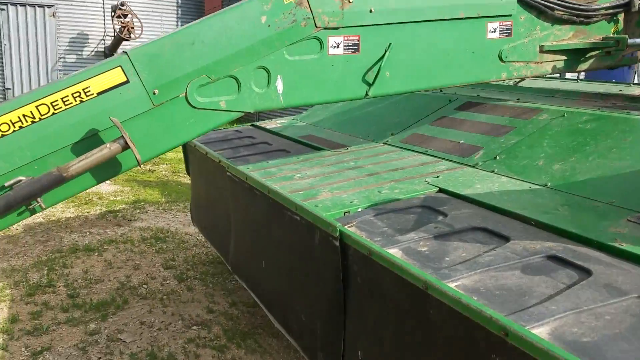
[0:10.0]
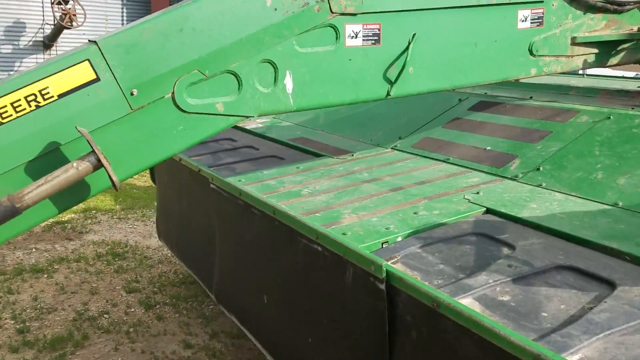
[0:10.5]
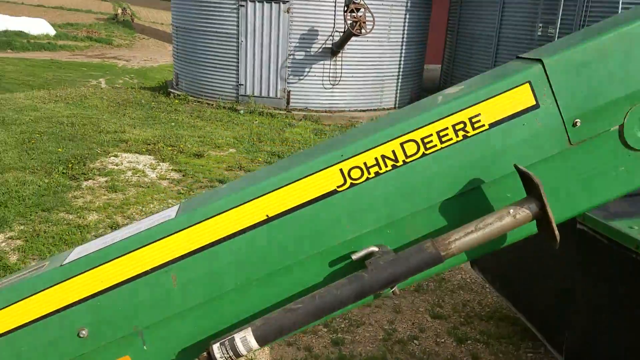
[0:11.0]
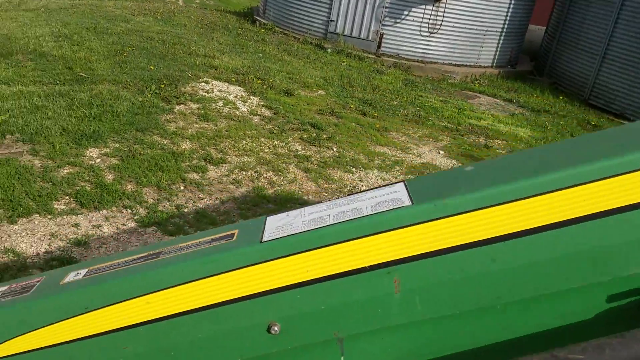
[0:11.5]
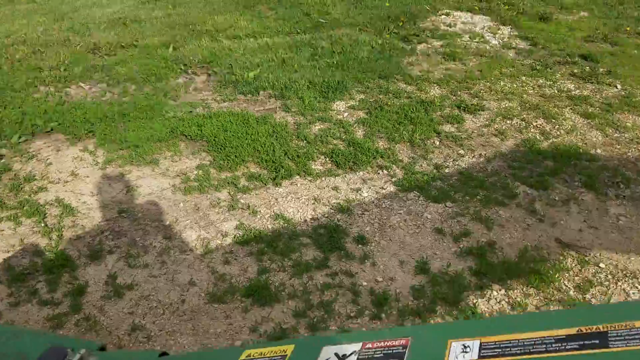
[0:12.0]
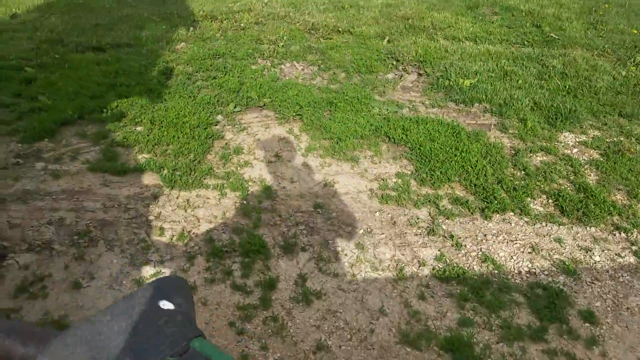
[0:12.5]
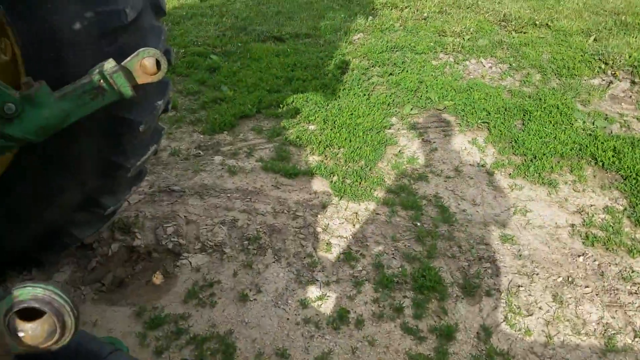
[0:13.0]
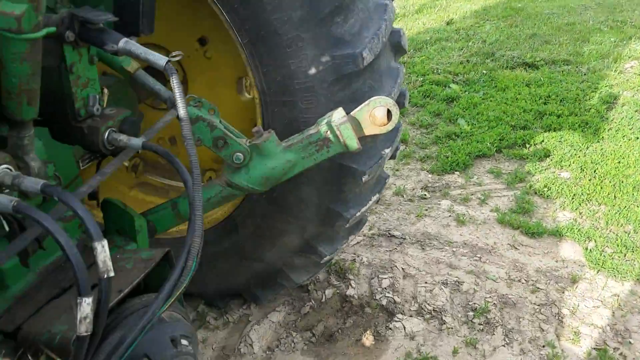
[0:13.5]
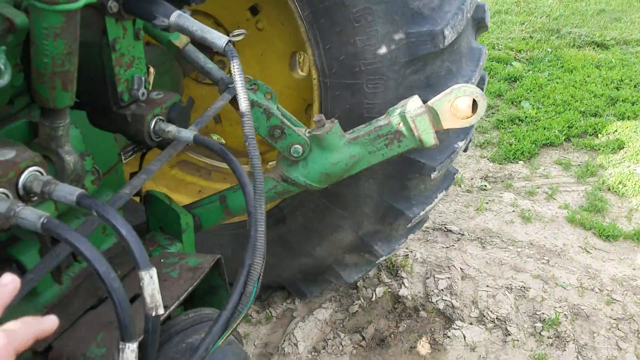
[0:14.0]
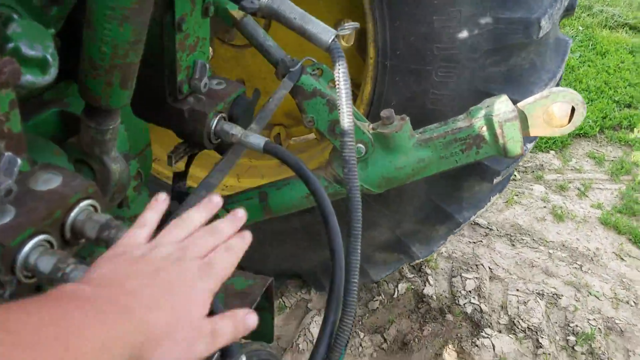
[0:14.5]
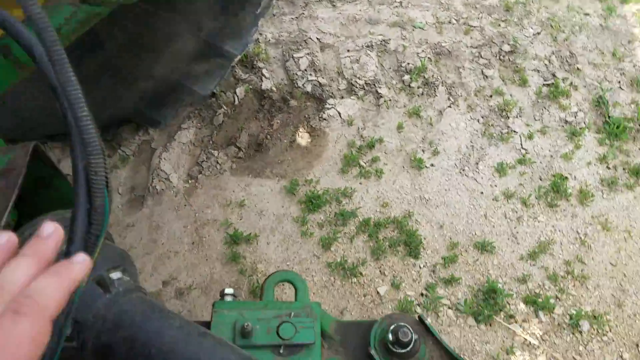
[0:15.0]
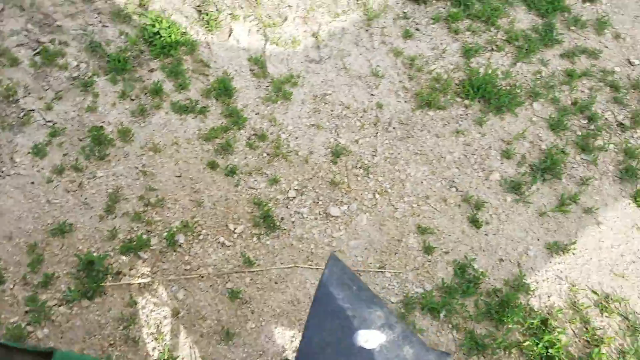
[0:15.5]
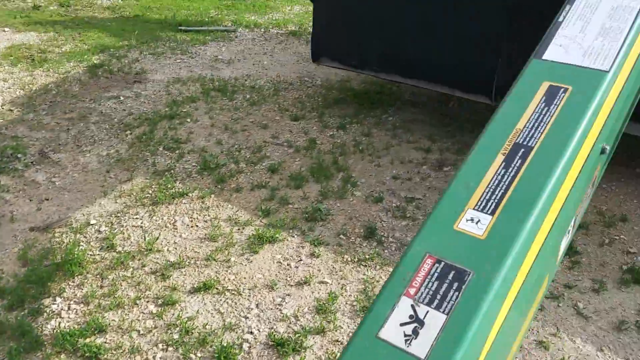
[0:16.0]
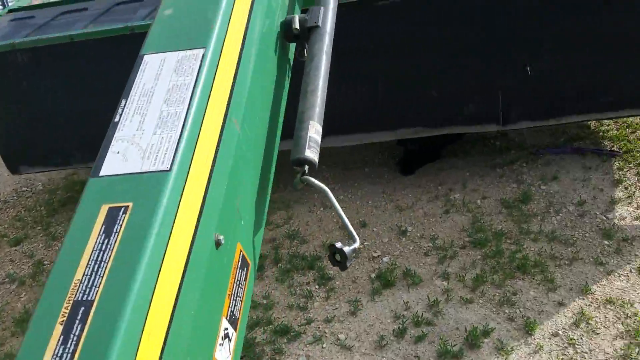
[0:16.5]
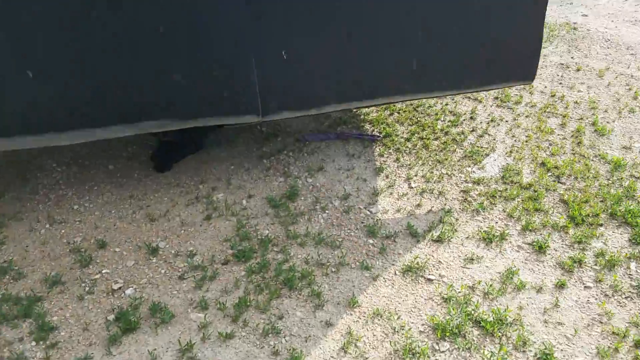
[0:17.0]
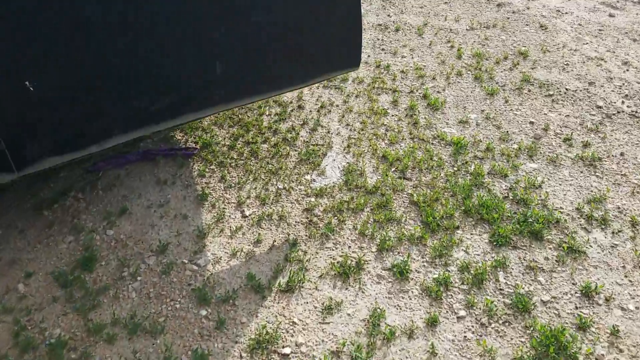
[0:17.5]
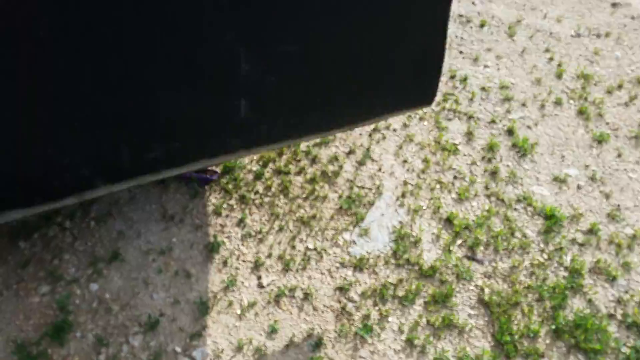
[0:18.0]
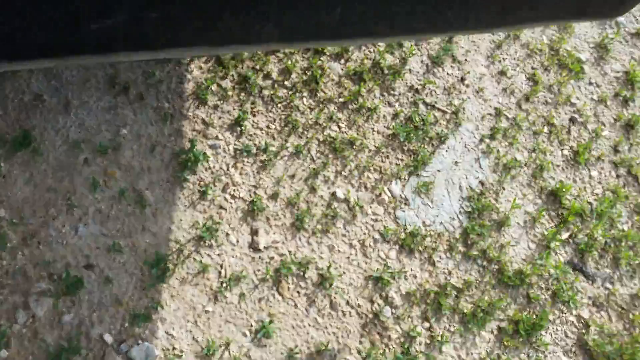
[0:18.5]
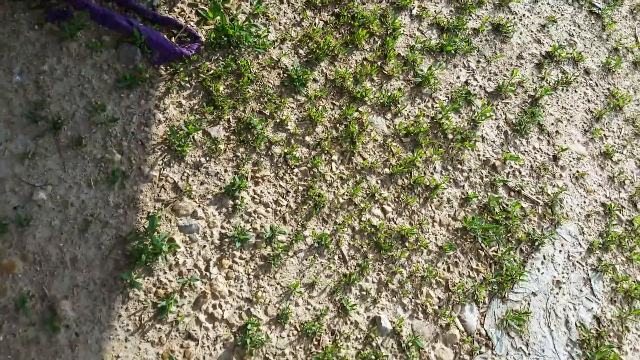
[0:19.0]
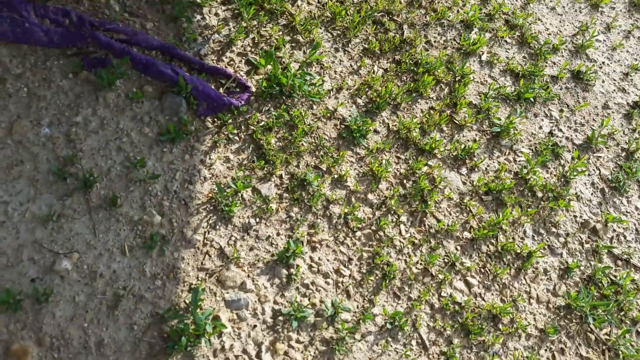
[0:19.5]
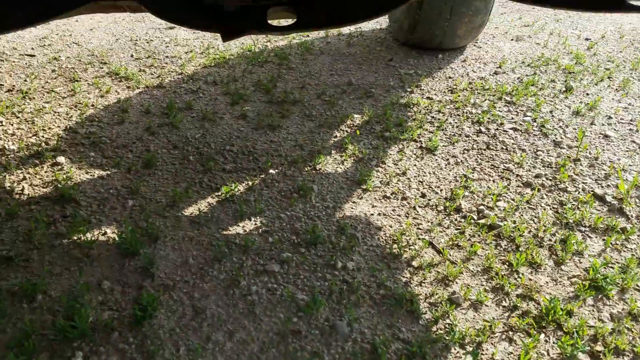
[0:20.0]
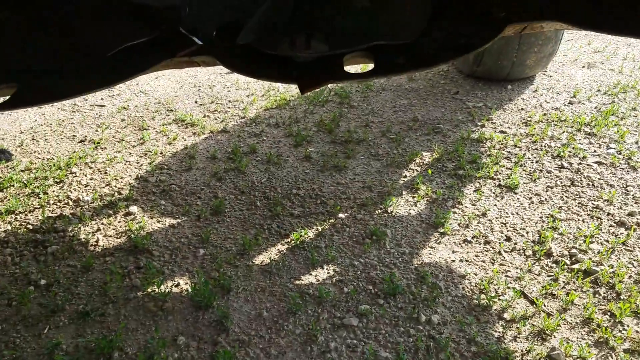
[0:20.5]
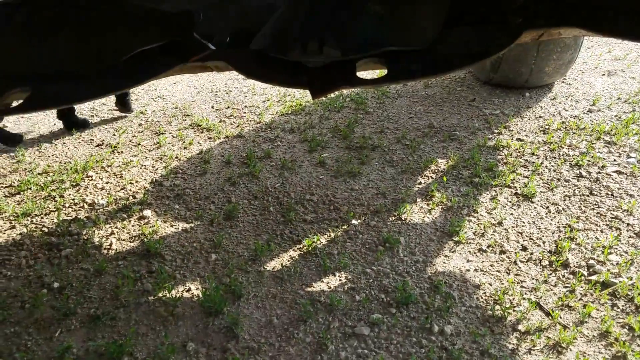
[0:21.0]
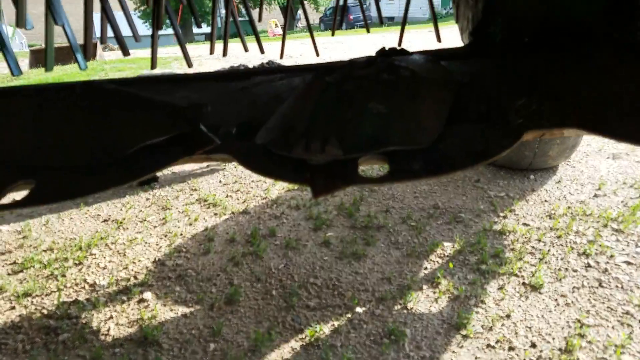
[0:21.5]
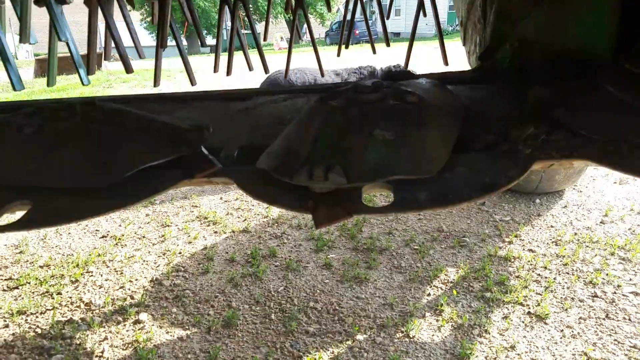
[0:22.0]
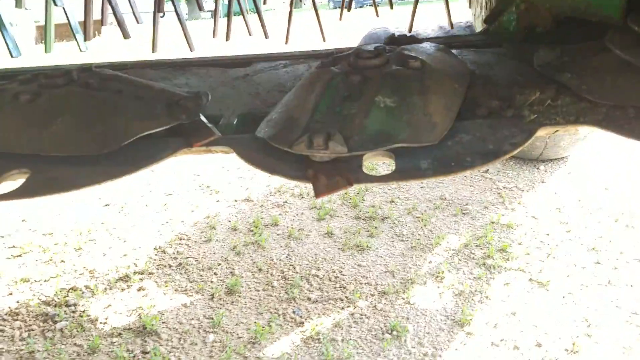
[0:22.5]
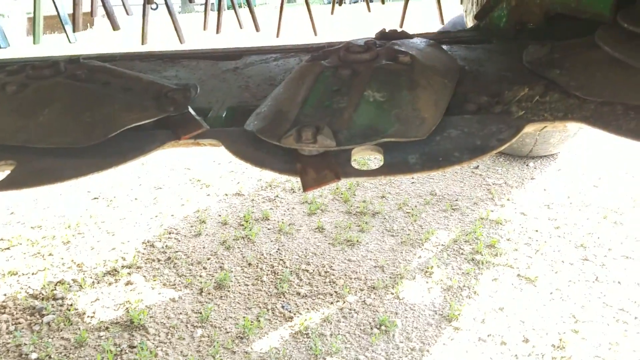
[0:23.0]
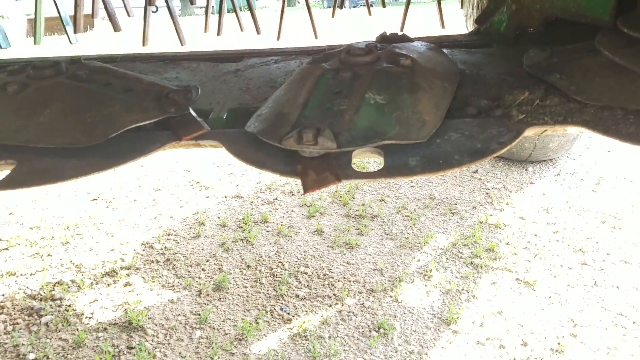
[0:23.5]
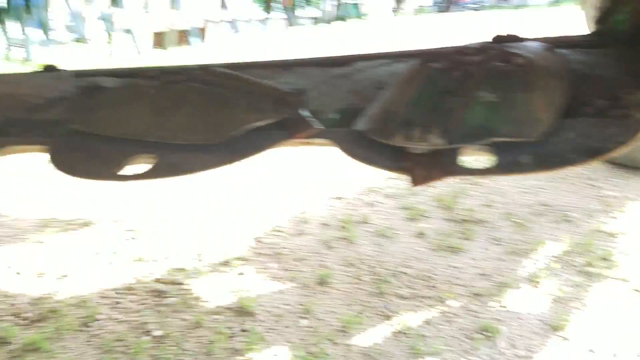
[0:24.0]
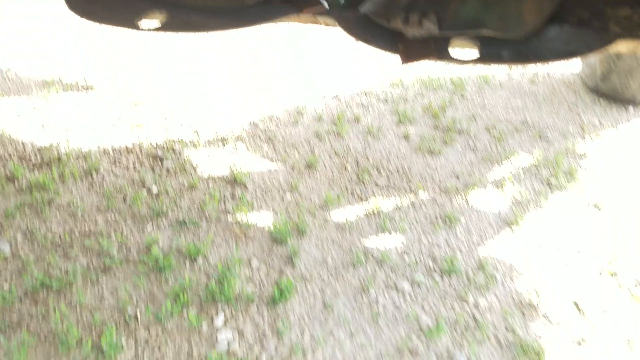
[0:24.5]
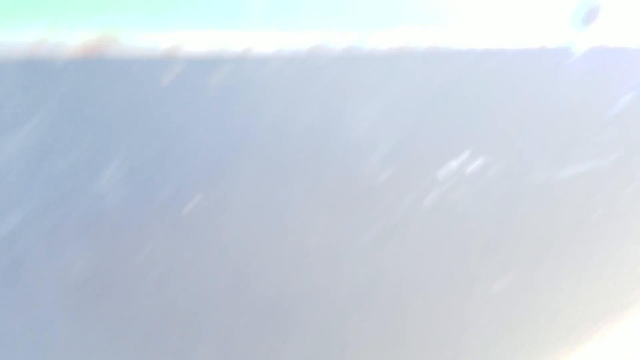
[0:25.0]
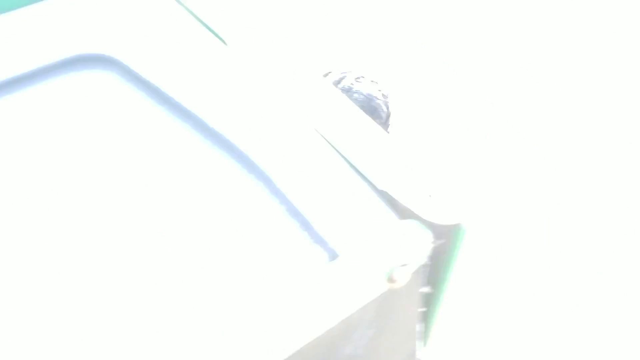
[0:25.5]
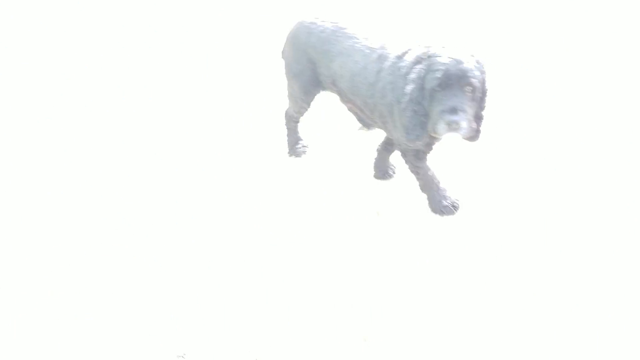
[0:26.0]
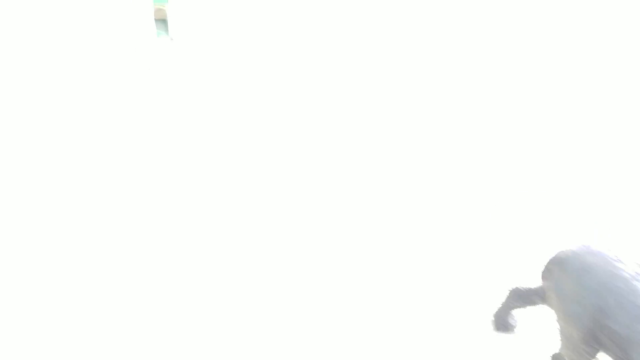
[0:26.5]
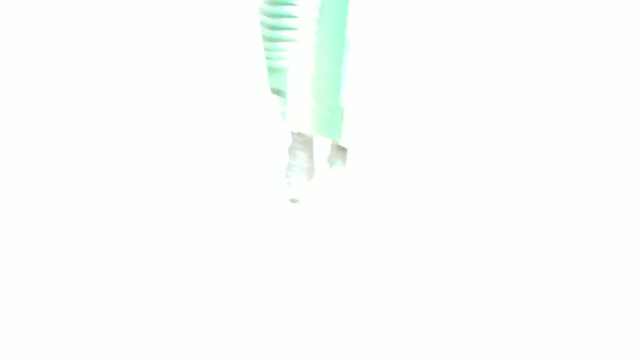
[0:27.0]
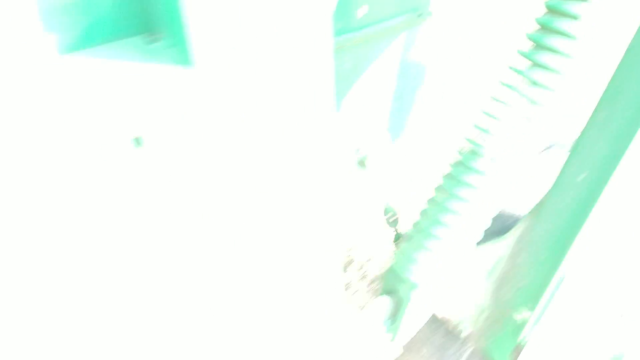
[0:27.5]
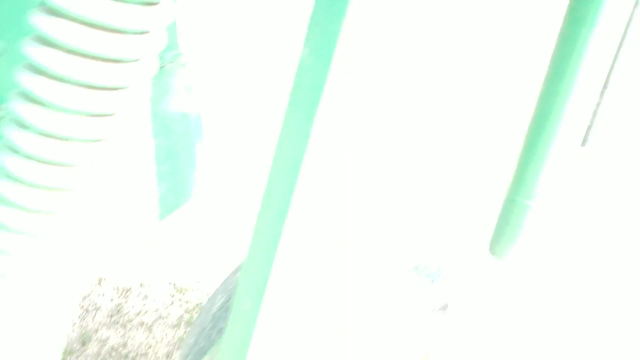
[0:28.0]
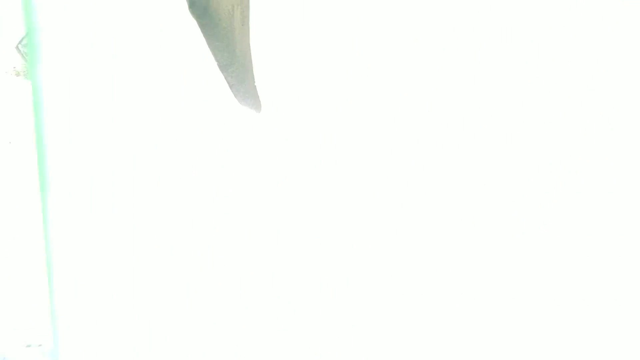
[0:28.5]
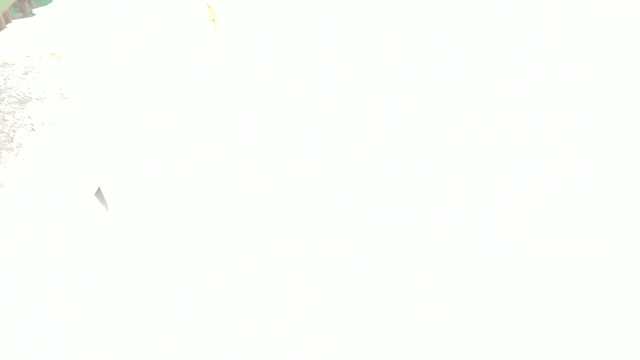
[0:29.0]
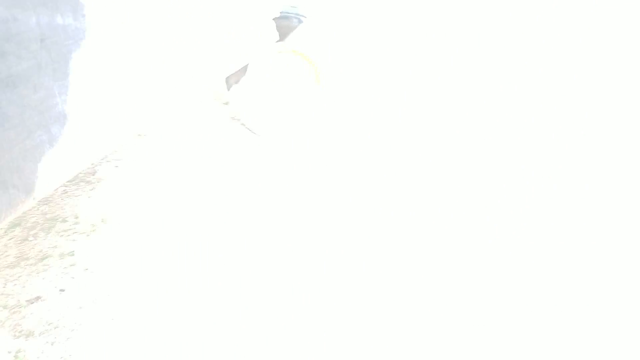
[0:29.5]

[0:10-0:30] The green John Deere equipment is shown in a close-up of the combine, which has "John Deere" on it, while the camera moves around a lot. The shadow of a man appears; he wears a baseball hat that probably says John Deere, and he points at something, apparently the hoses connecting the tractor to the combine. He goes down, points to some hoses, and then goes under the combine, though it does not show well what he is looking at. A black dog walks by. The picture becomes very bright and overexposed, so nothing can be seen for a moment. The ground looks very dry, with tire tracks from the tractor visible. There are rolling hills, but in general the land is very flat.